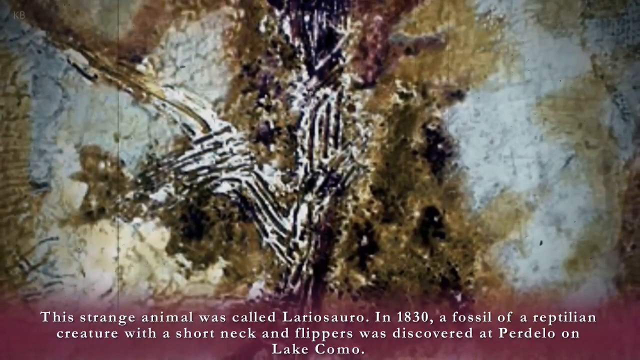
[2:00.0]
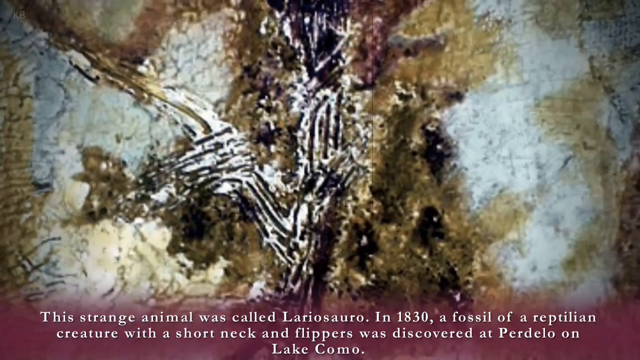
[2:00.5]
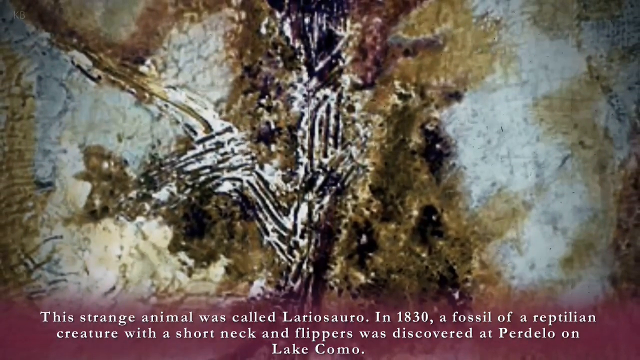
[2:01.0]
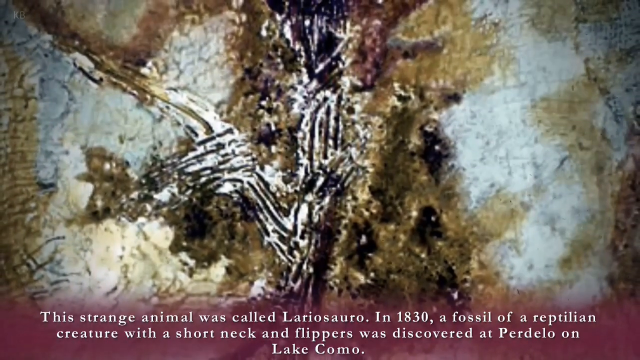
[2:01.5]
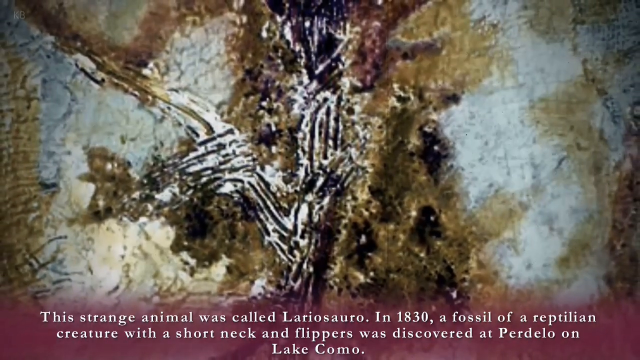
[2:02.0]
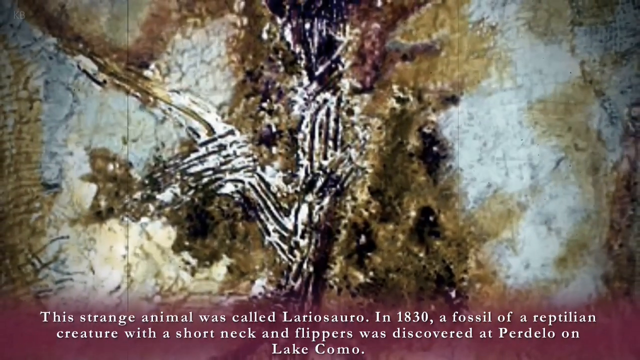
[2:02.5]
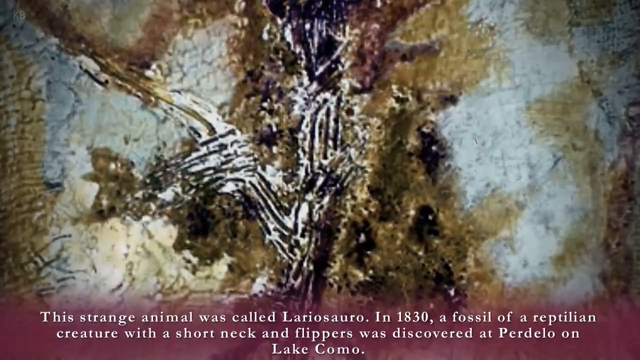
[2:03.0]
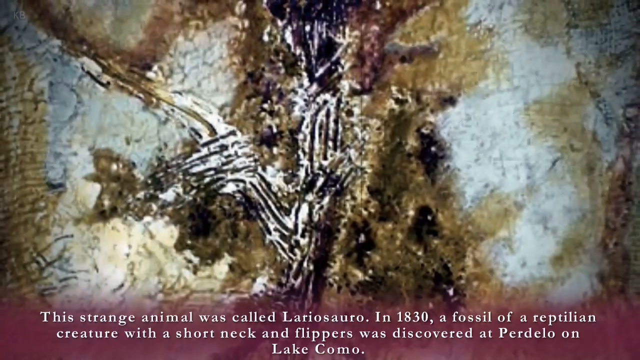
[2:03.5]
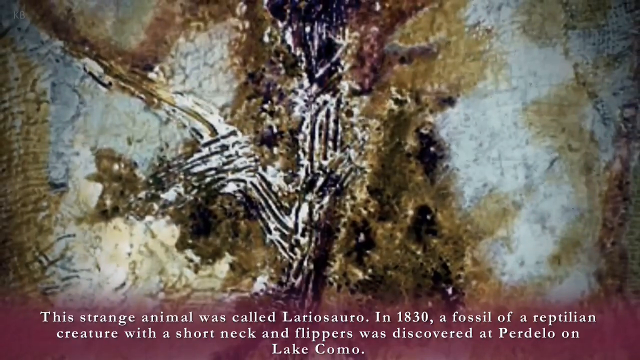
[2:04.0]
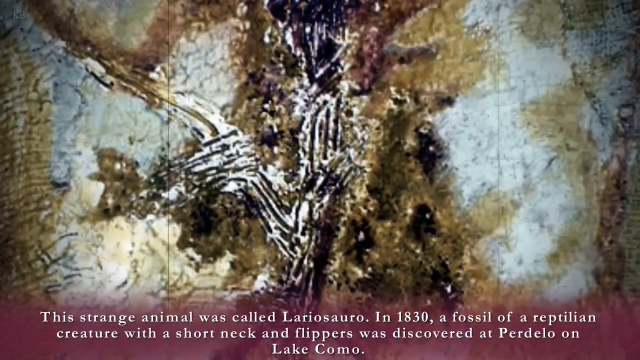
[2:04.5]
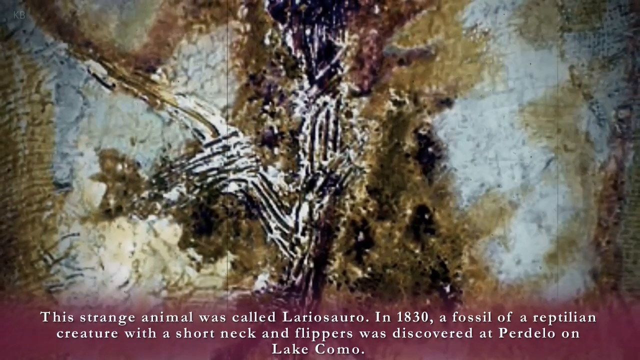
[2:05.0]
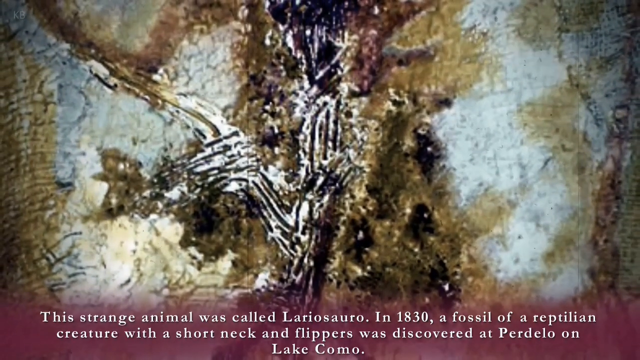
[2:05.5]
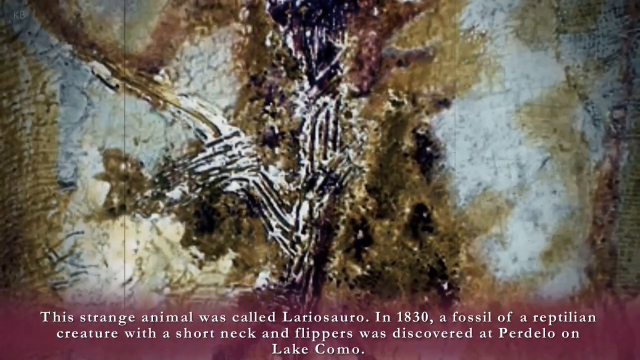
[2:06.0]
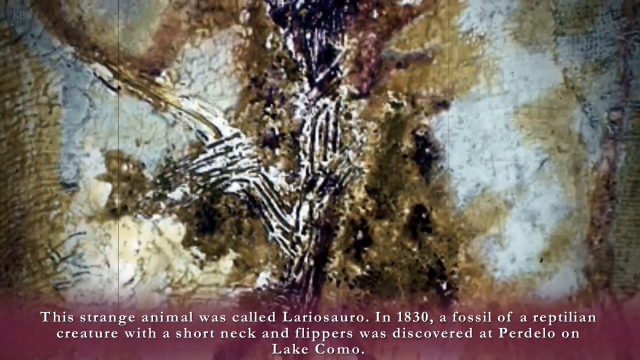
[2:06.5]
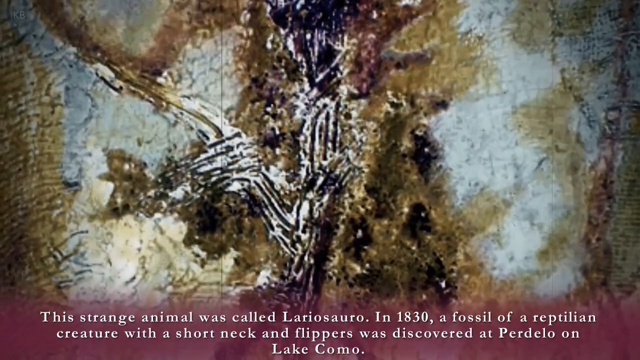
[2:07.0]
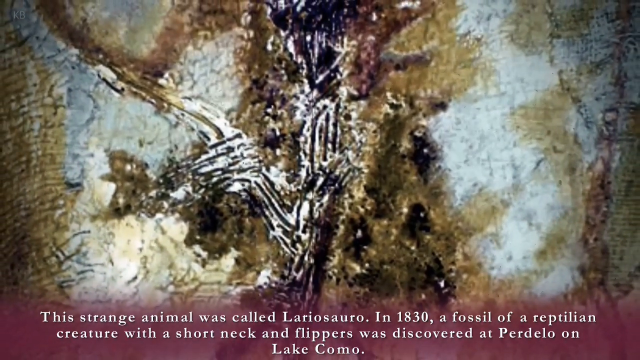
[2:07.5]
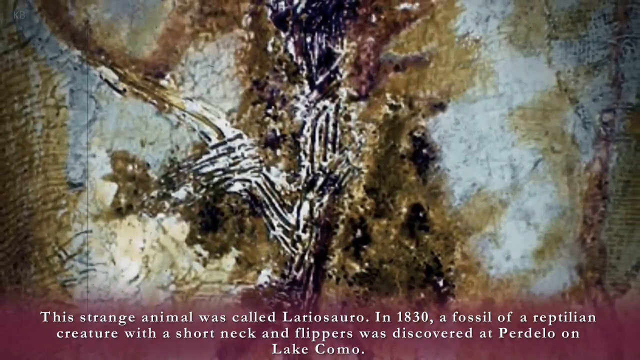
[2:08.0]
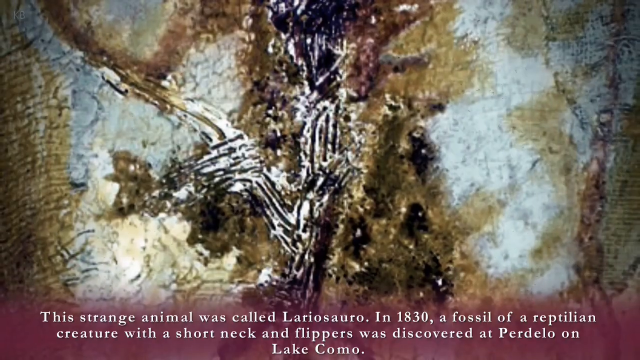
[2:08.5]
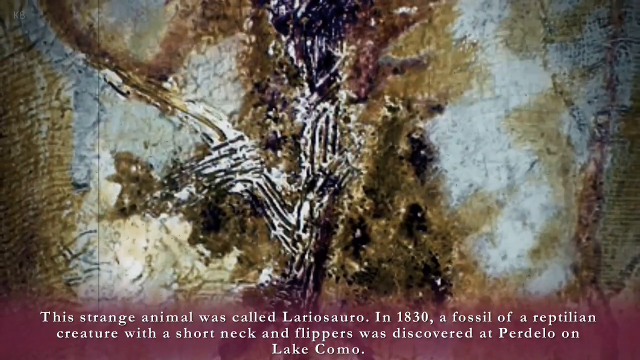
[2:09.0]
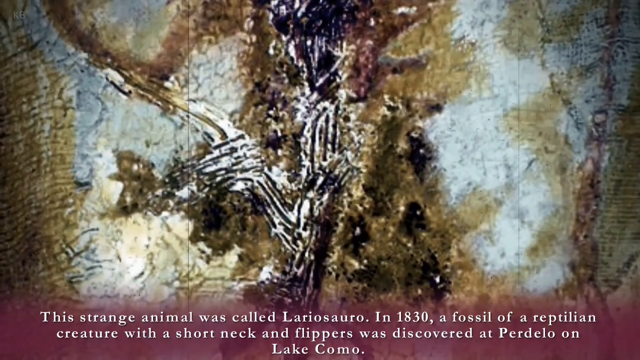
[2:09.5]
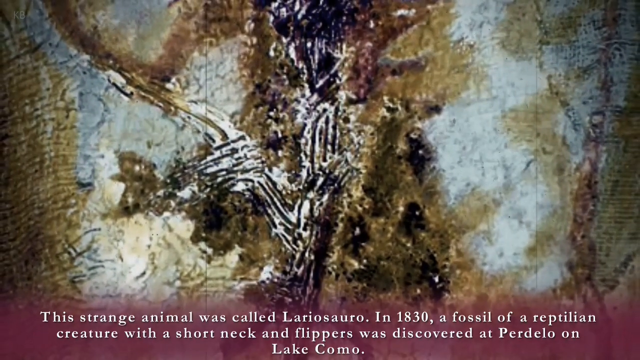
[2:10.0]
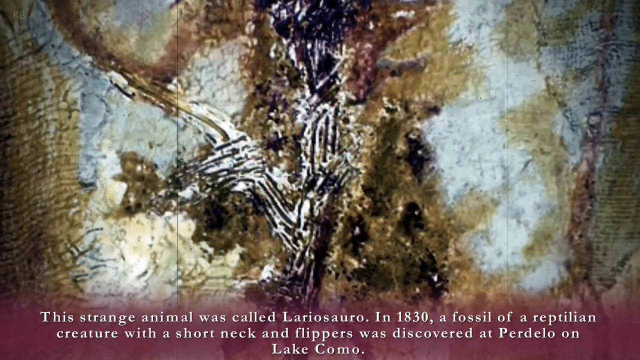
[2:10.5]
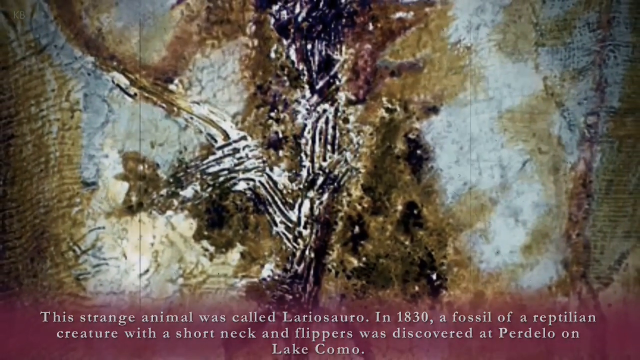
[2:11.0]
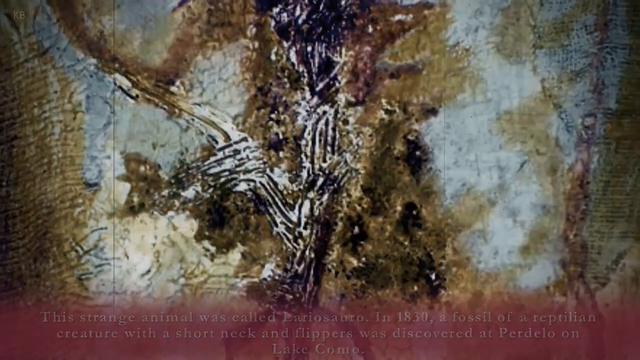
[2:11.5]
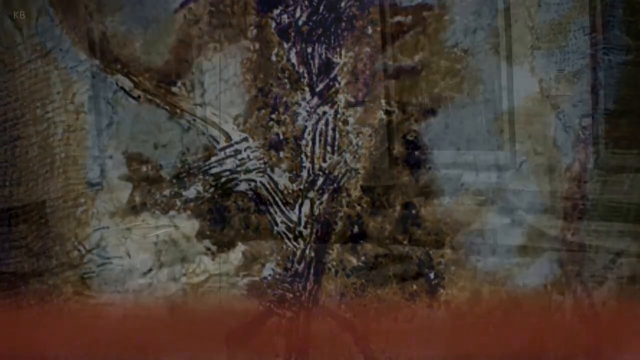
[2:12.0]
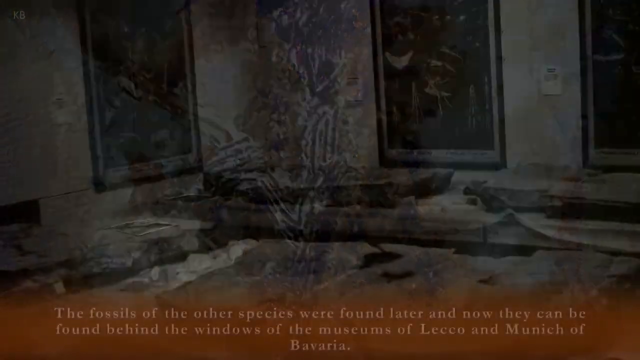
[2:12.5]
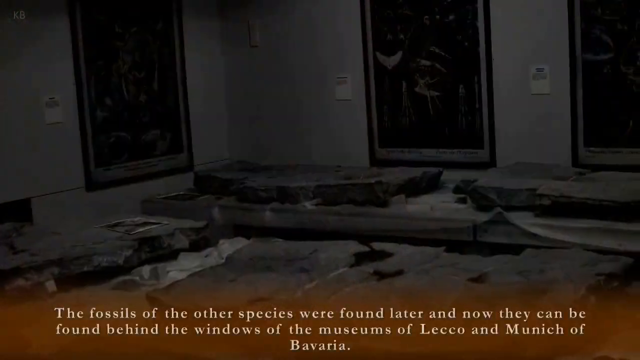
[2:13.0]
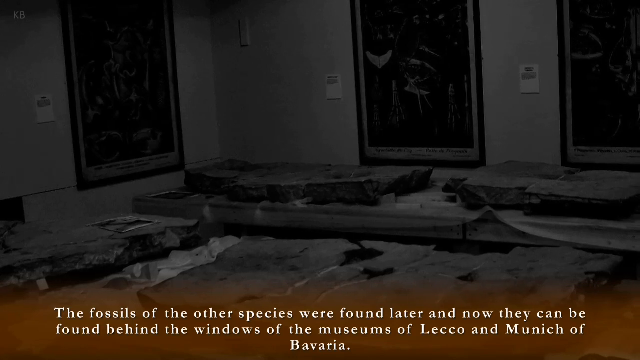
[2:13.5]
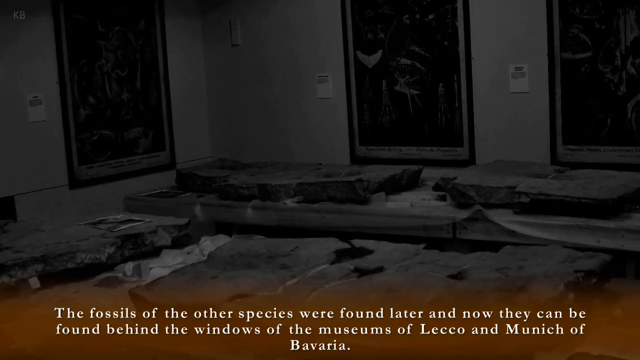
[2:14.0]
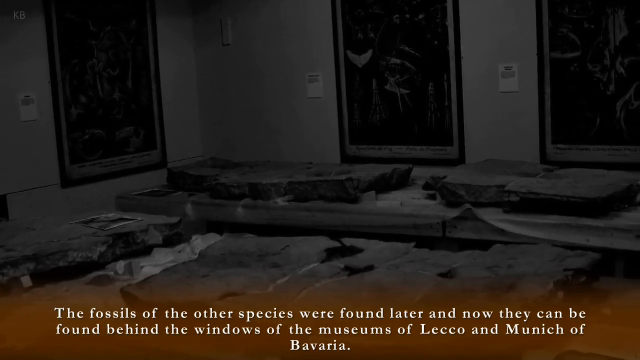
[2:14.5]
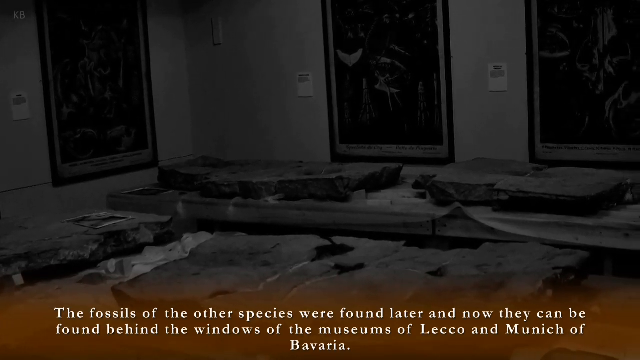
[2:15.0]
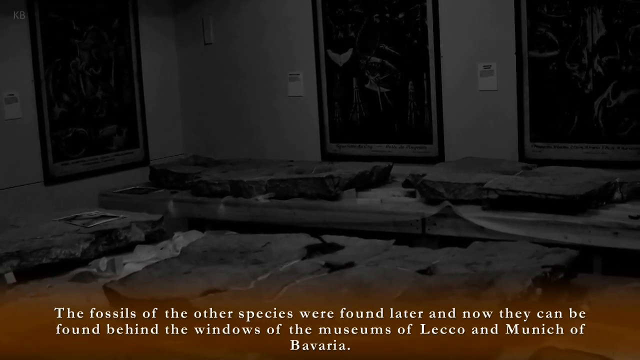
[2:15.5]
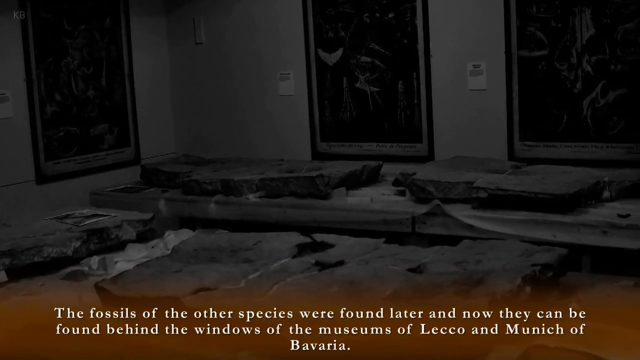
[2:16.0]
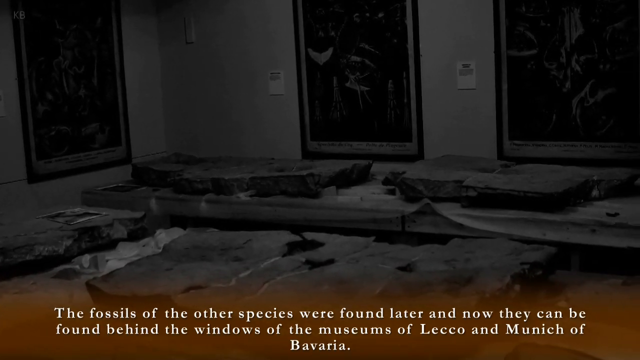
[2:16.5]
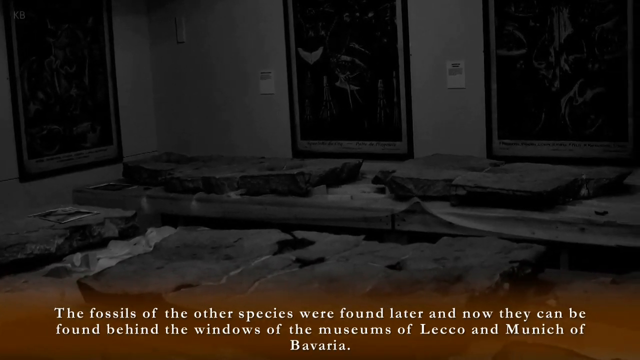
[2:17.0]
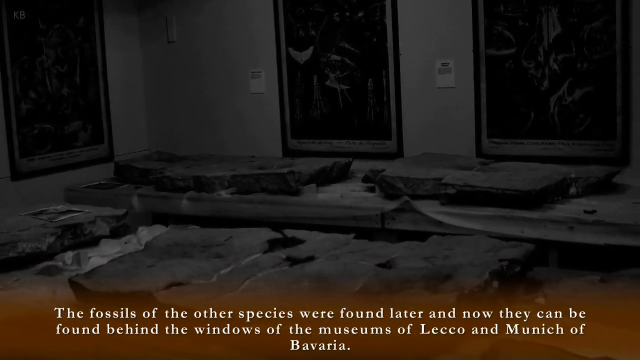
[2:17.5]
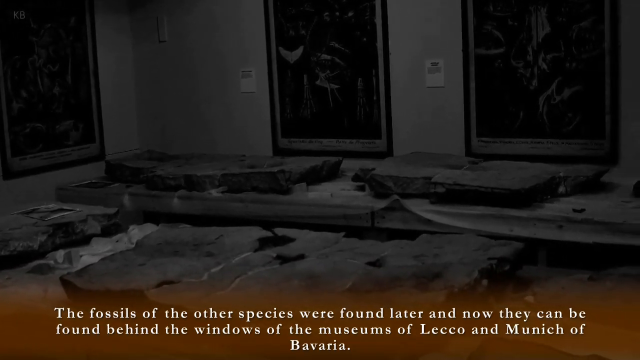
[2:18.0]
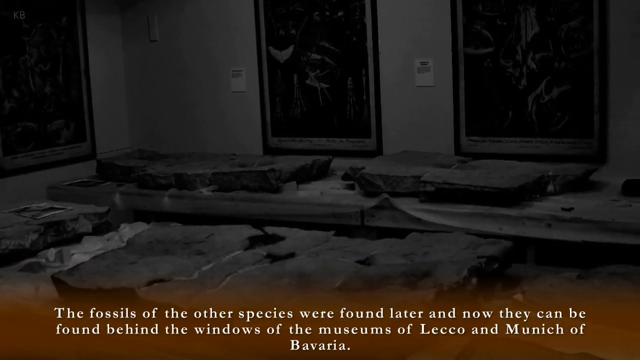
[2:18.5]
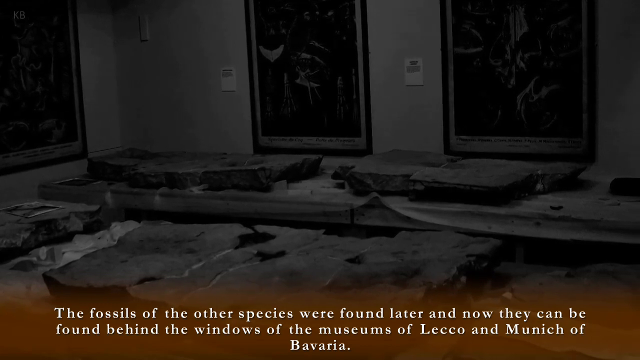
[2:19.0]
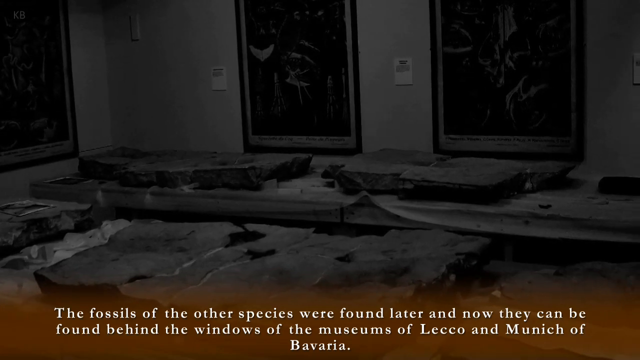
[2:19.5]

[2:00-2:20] Text says that in 1830 a fossil of a reptile creature with a short neck and flippers was discovered on the lake, and that "The fossils of the other species were found later and now they can be found behind the windows of the museums."